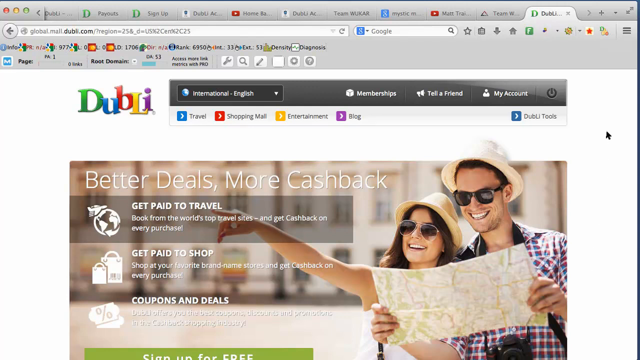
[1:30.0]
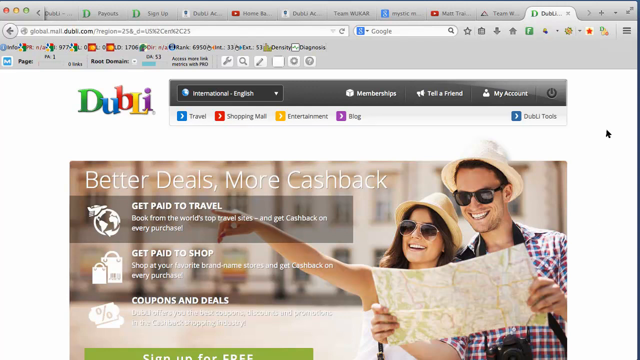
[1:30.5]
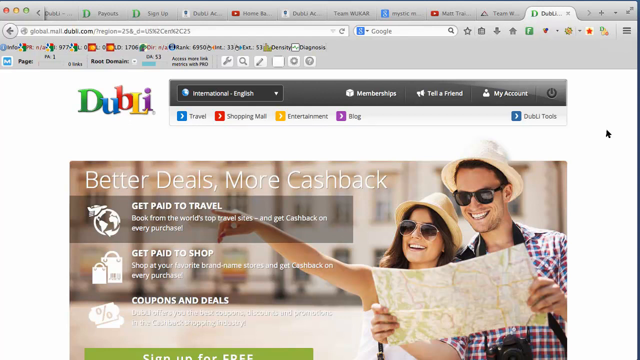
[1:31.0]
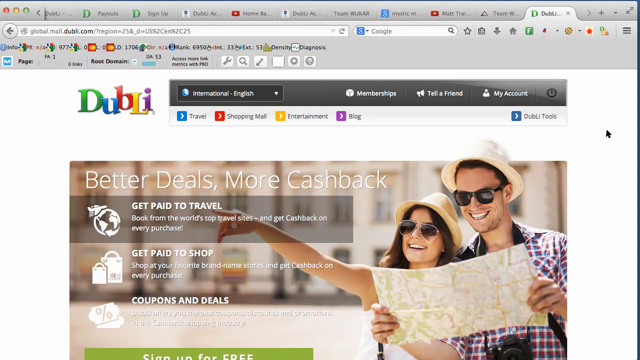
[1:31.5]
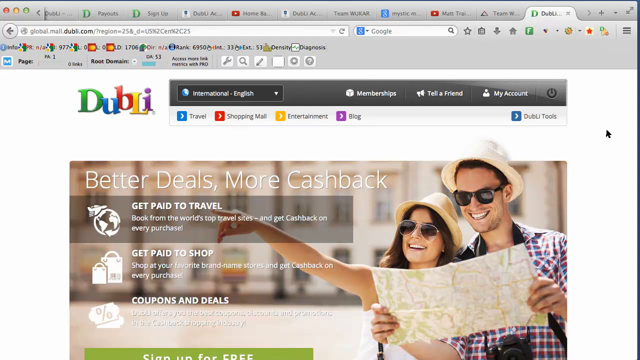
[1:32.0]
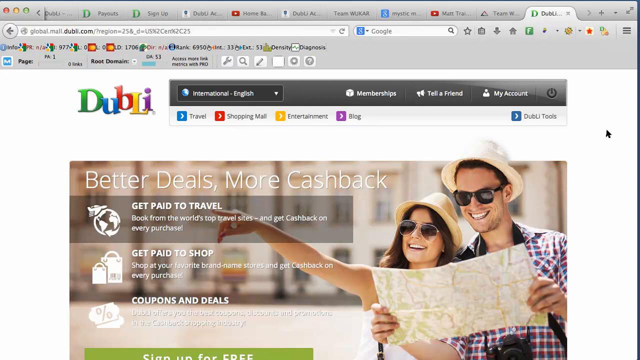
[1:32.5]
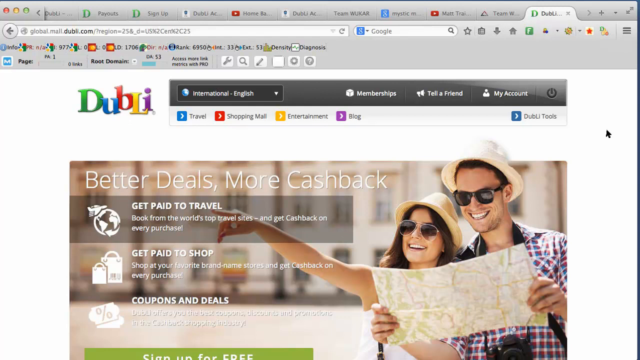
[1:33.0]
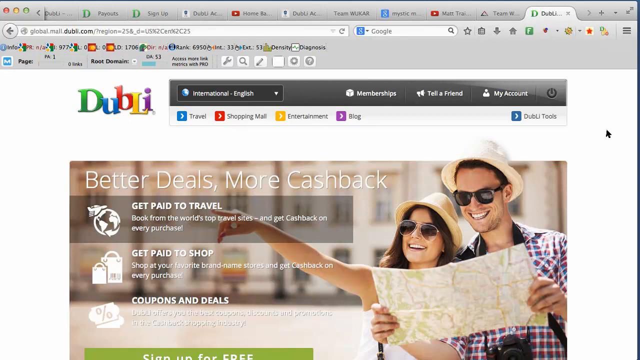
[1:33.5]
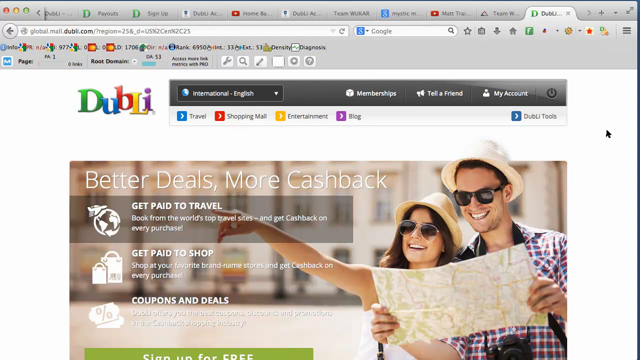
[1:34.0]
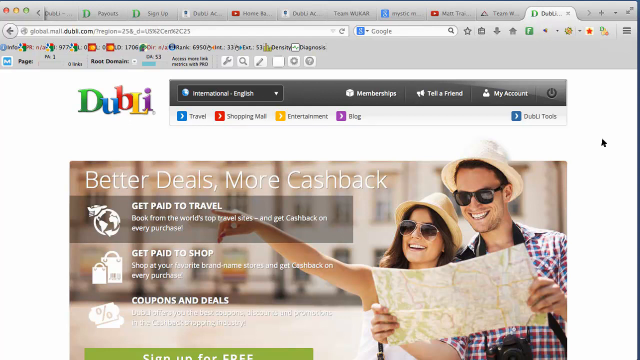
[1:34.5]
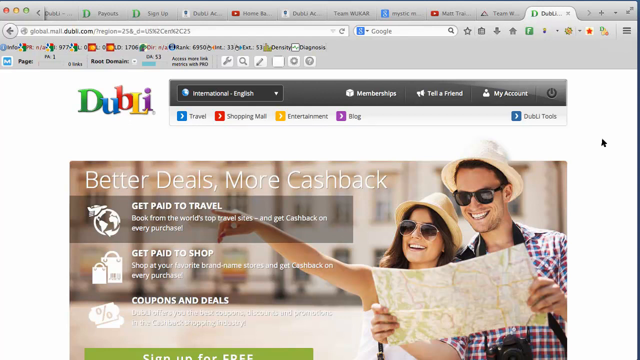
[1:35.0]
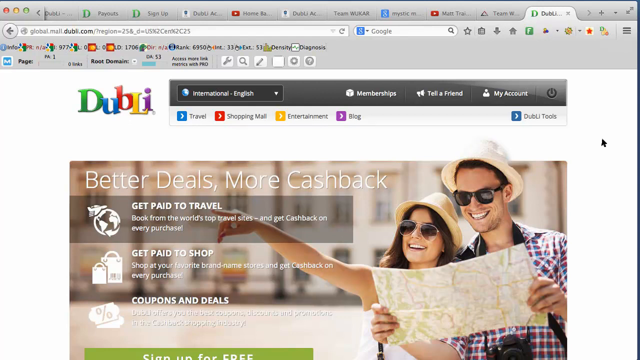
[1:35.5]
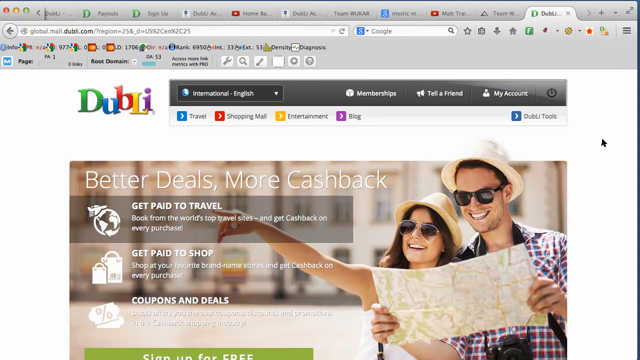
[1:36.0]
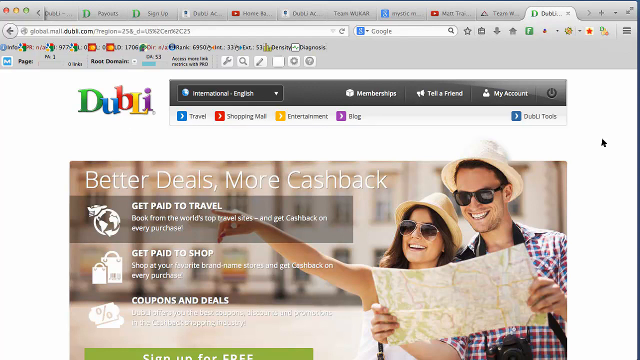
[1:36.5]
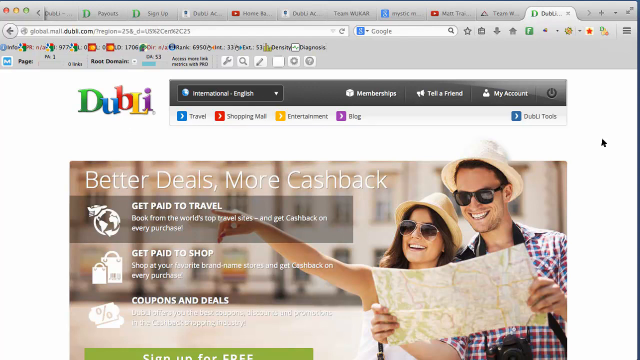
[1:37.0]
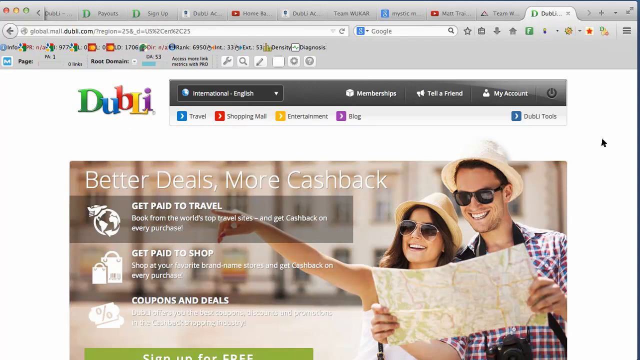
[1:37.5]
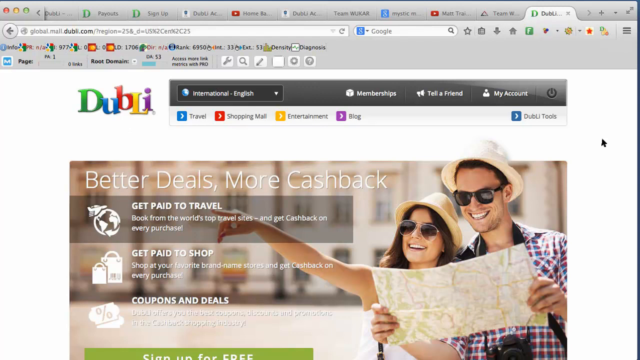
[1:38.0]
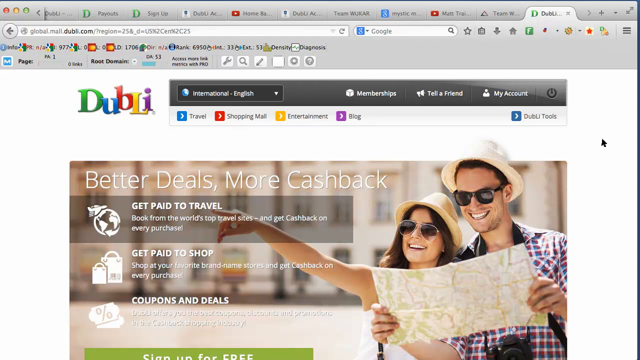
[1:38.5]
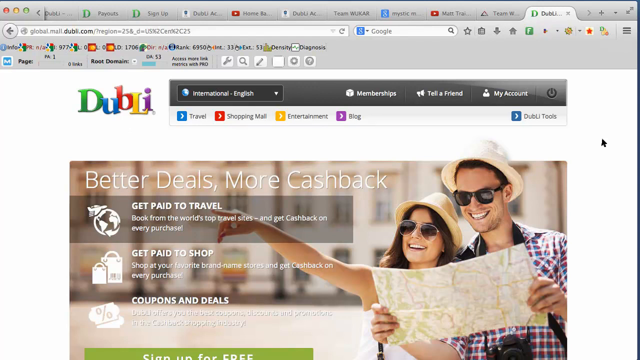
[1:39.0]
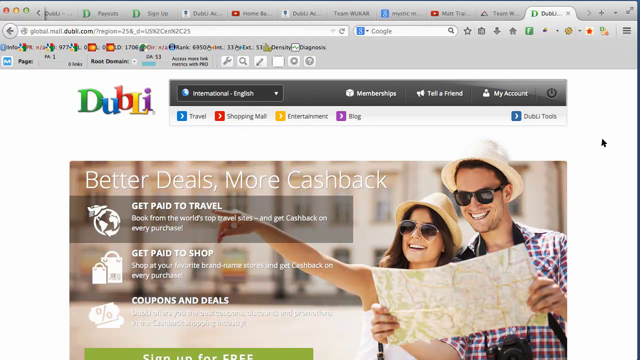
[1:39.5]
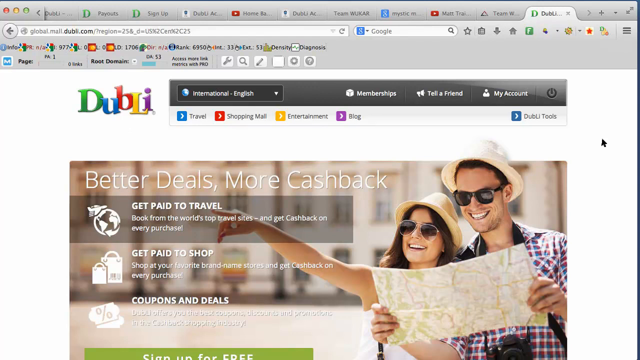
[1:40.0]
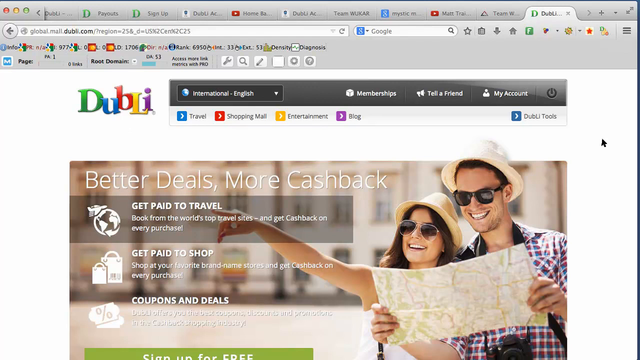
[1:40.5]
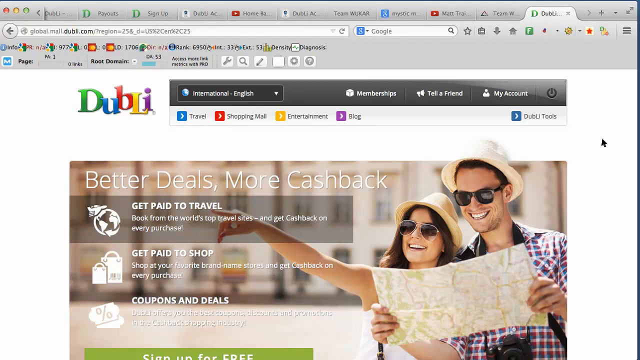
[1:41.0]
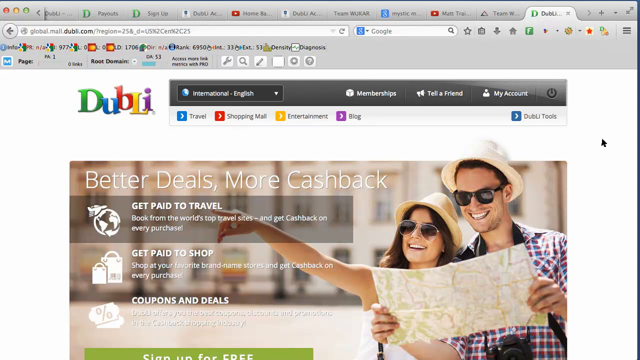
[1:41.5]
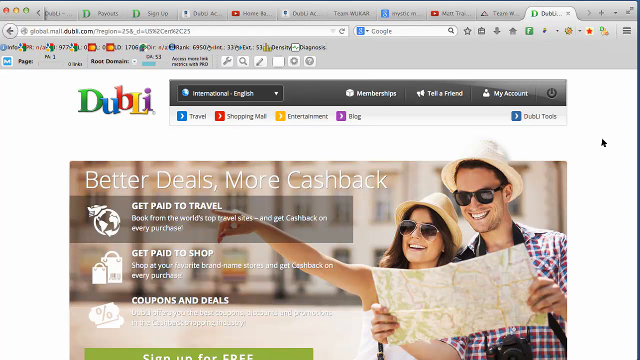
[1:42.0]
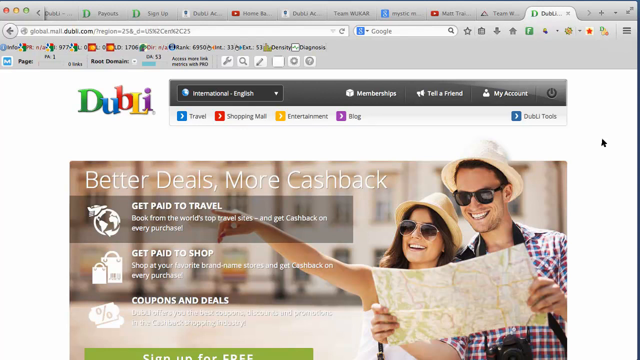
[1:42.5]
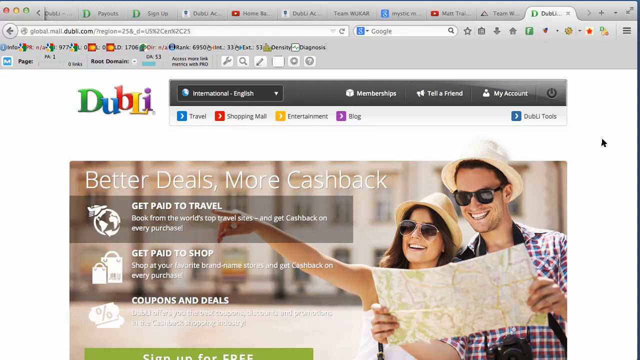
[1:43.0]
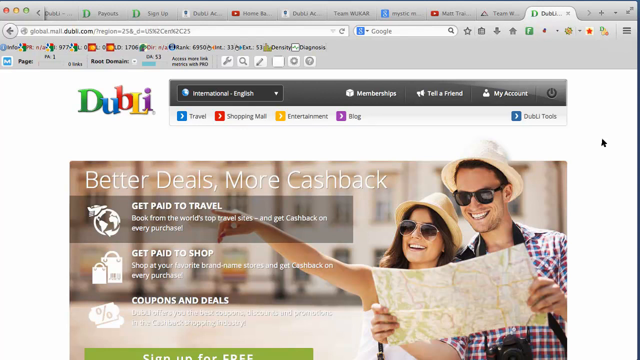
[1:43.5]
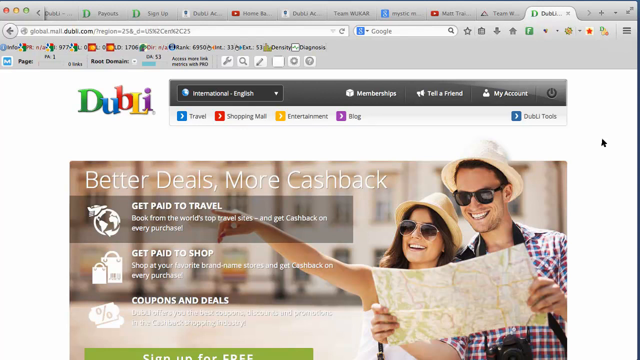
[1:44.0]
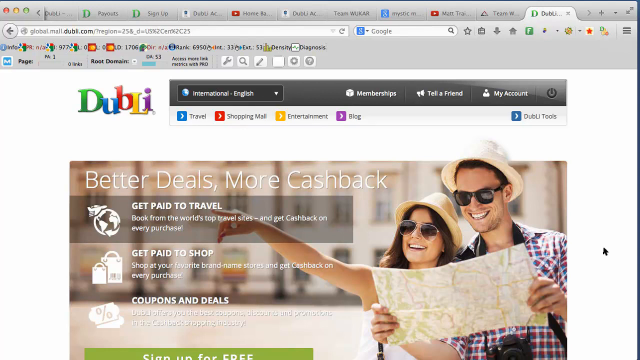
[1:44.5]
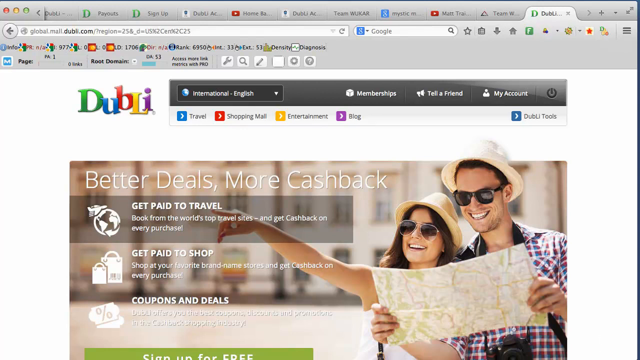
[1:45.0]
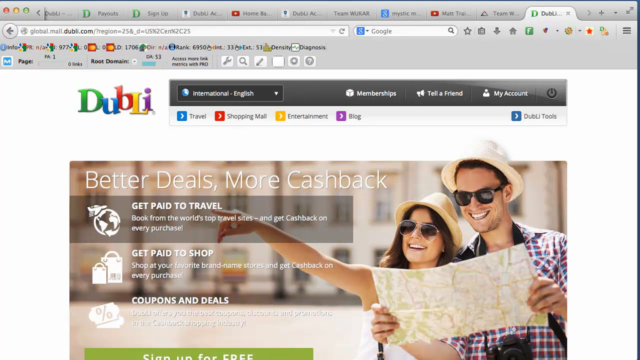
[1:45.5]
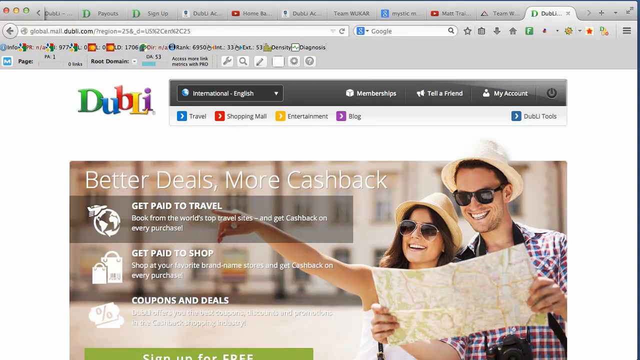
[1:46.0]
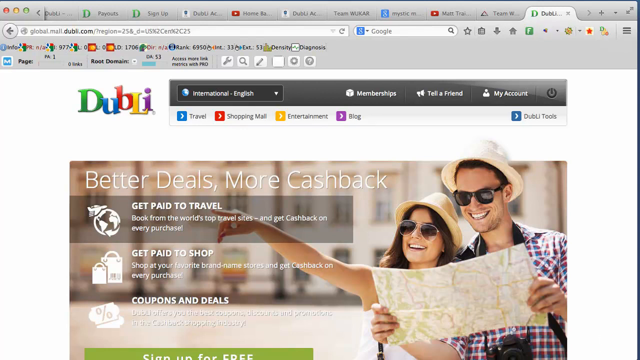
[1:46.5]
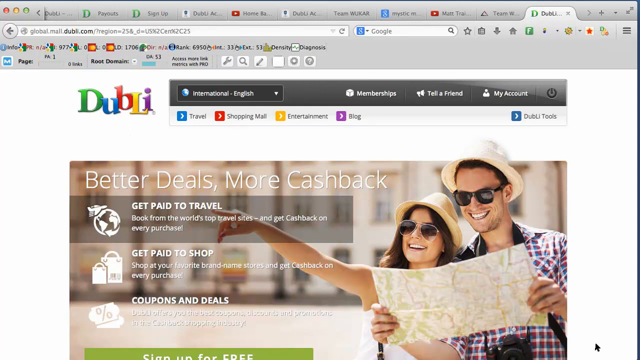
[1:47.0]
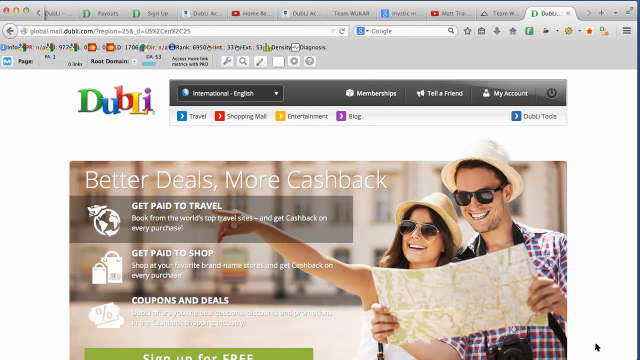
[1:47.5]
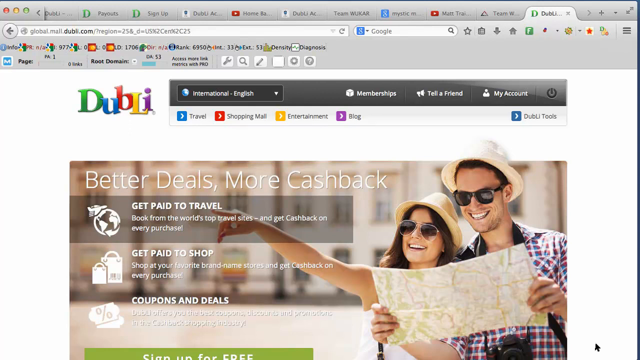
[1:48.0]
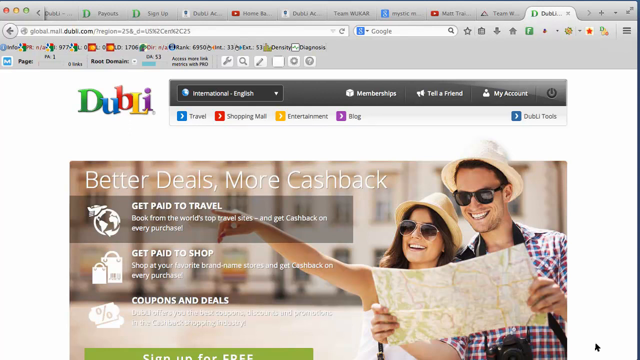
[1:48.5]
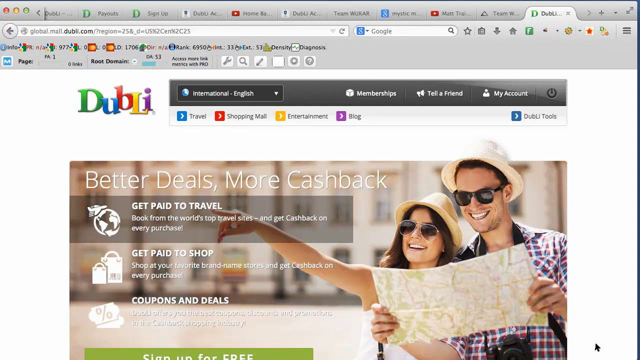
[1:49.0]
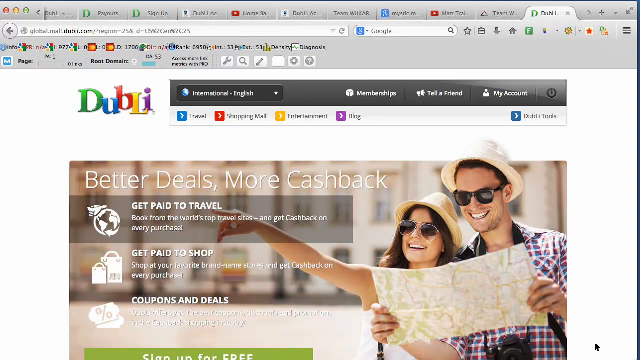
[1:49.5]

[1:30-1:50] The couple is on the right side of the screen, wearing matching hats, with a map that the man appears to be holding. The woman points up with the pointer finger of her right hand toward something not visible. To the left of them, text reads "better deals, more cash back," and underneath it "get paid to travel," "book from the world's top travel sites and get cash back on every purchase!" Then it says "get paid to shop" and "shop at your favorite brand" followed by two or three unreadable words, possibly "names" or "stores," and "and get cash back on every purchase." Then it says "coupons and deals," which is hard to see because the white font blurs into the light background. The mouse cursor moves up and down on the right-hand side.